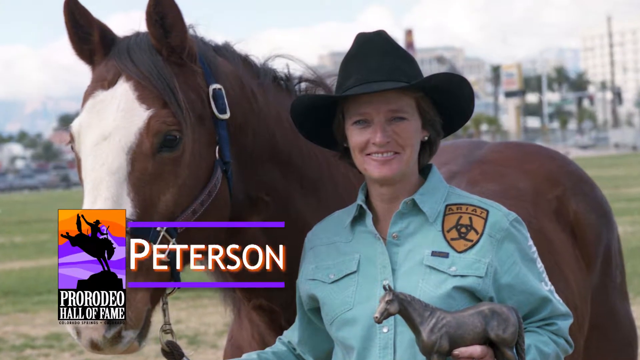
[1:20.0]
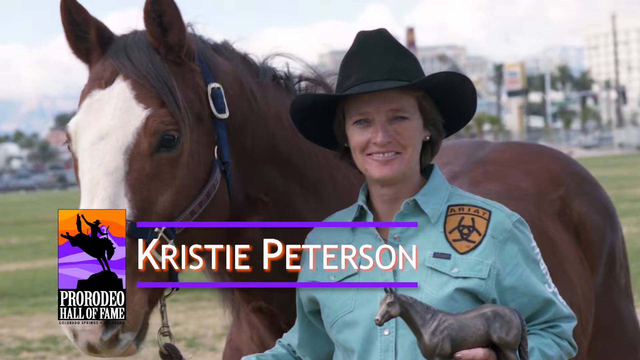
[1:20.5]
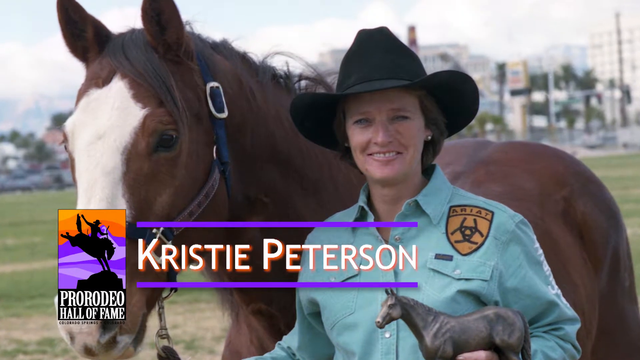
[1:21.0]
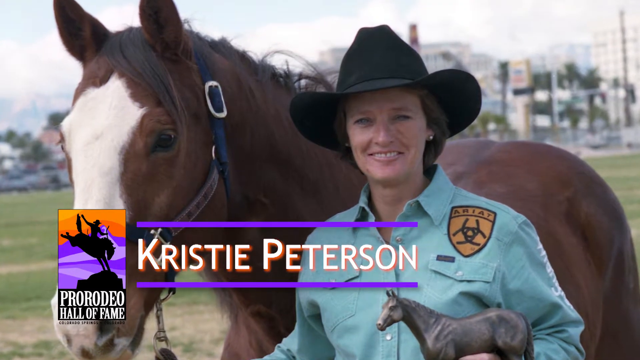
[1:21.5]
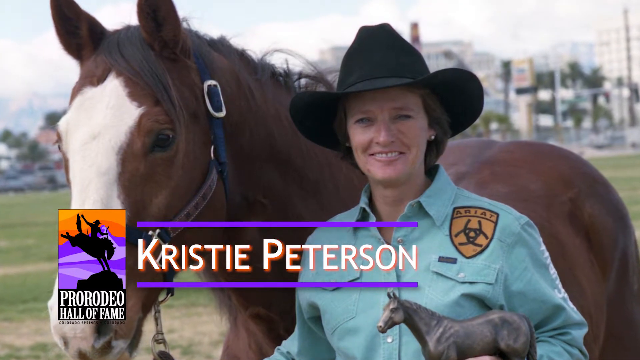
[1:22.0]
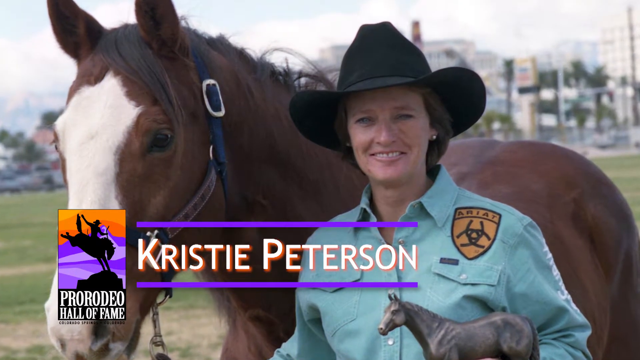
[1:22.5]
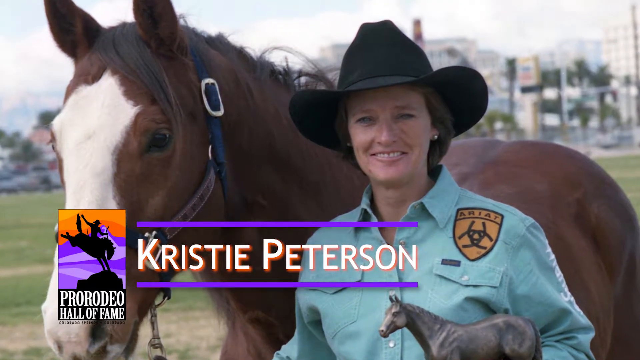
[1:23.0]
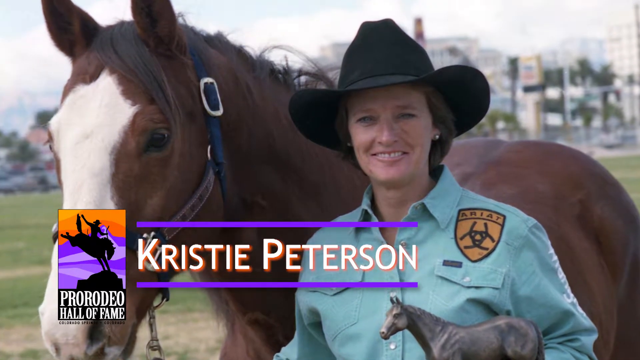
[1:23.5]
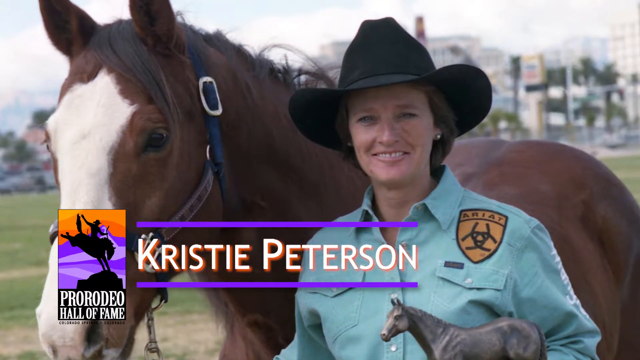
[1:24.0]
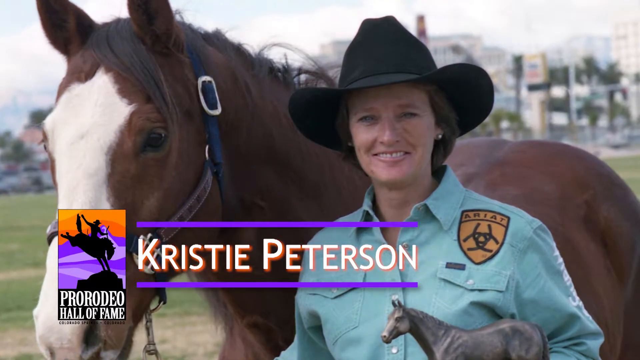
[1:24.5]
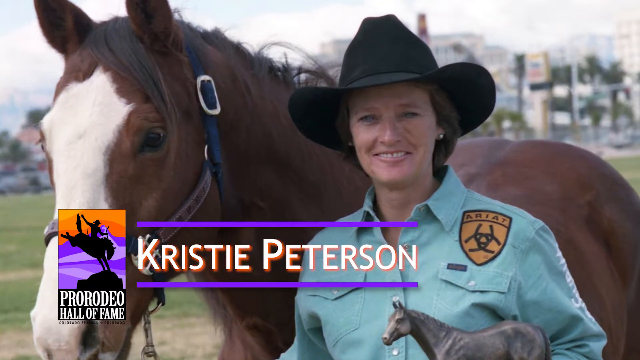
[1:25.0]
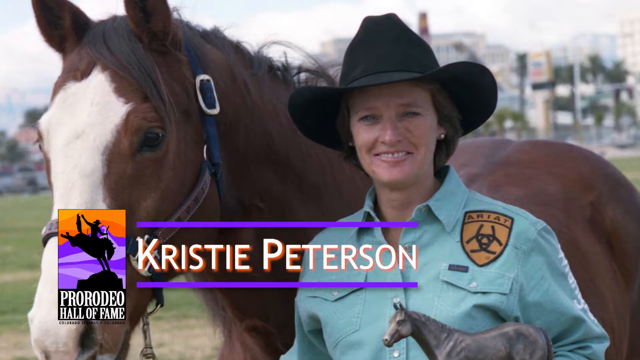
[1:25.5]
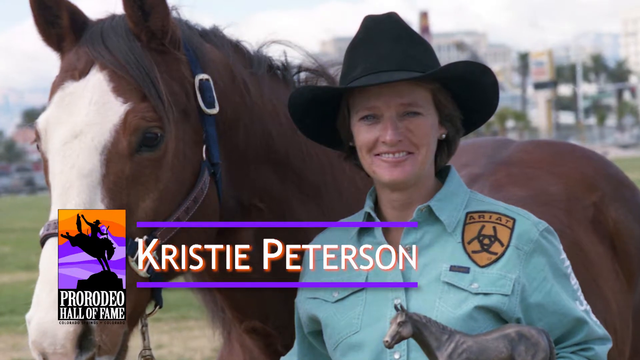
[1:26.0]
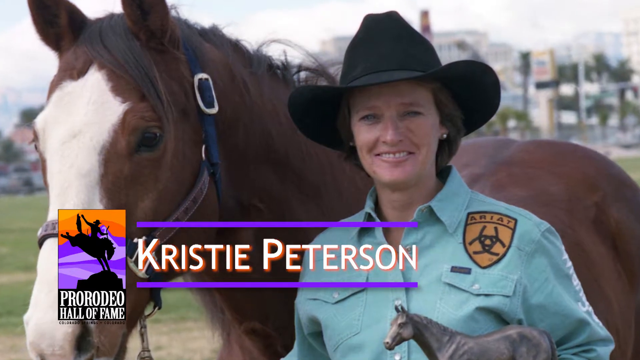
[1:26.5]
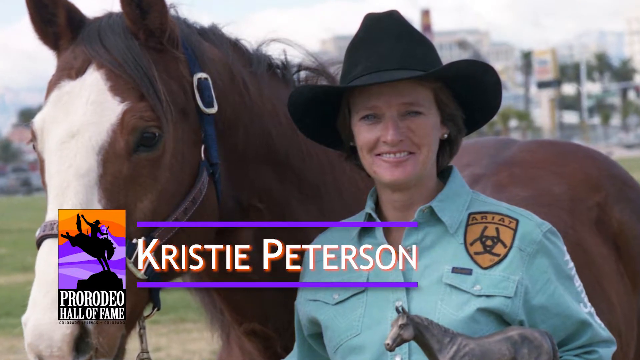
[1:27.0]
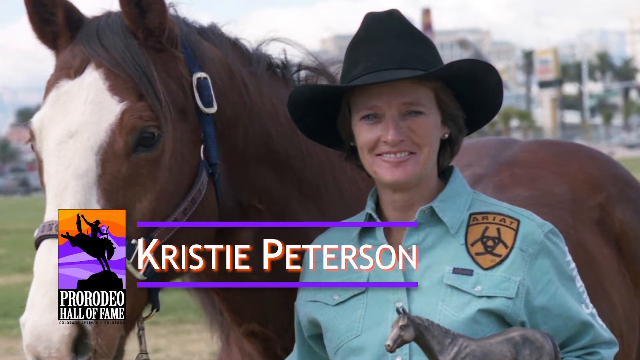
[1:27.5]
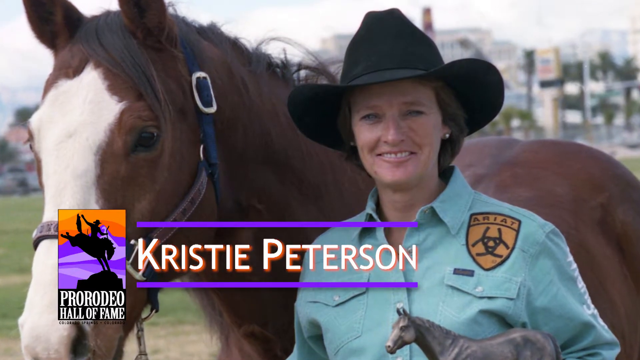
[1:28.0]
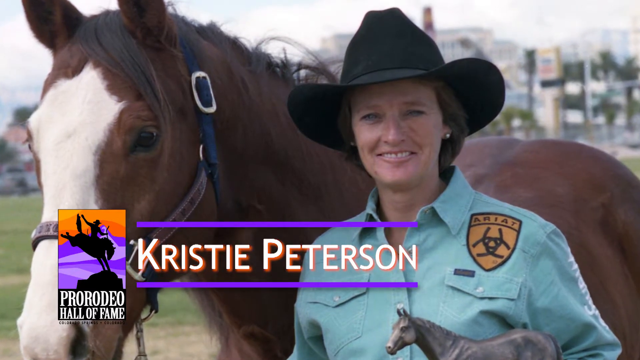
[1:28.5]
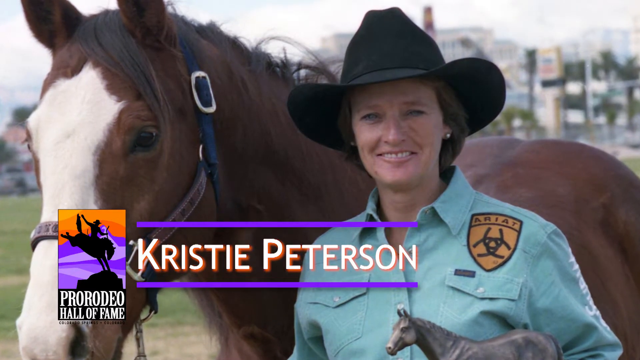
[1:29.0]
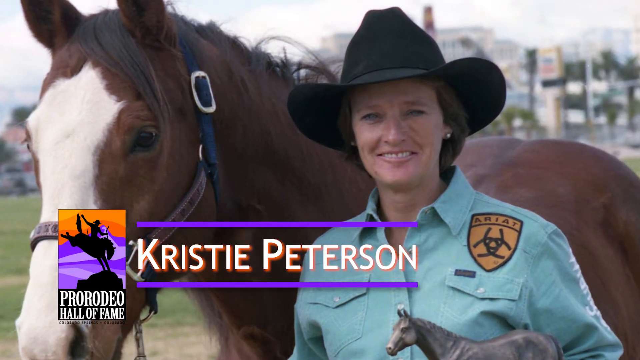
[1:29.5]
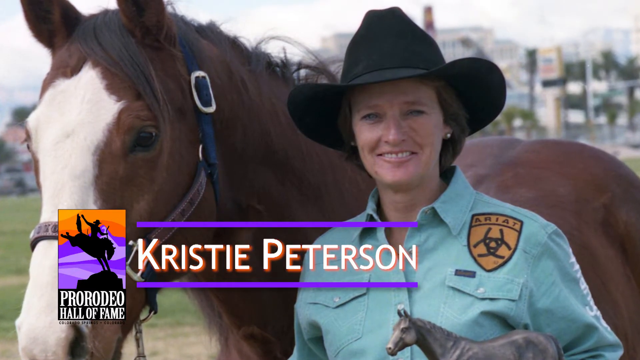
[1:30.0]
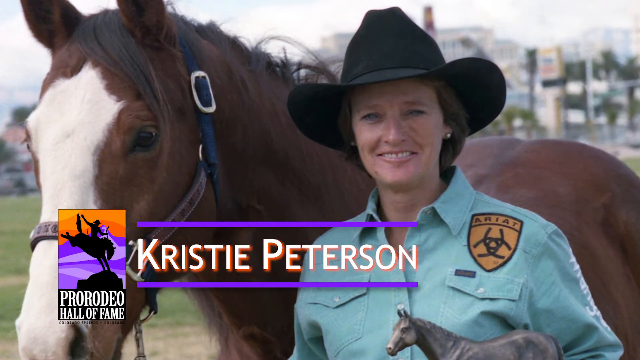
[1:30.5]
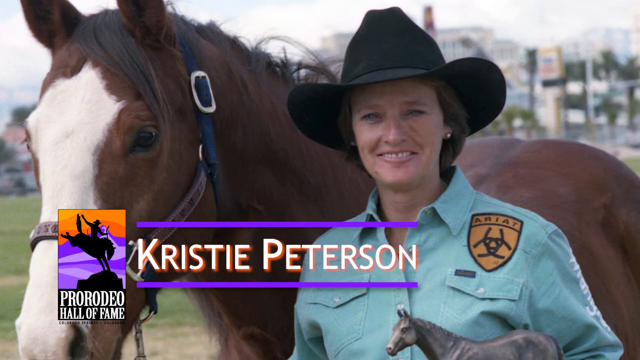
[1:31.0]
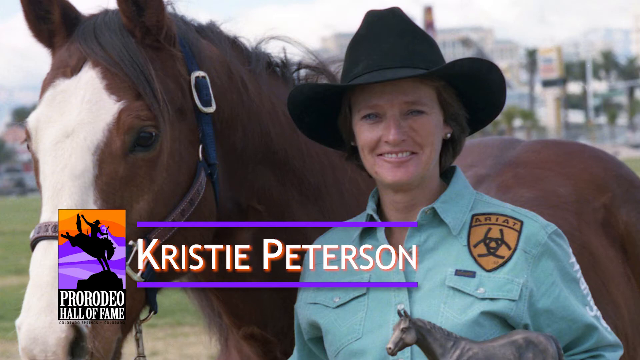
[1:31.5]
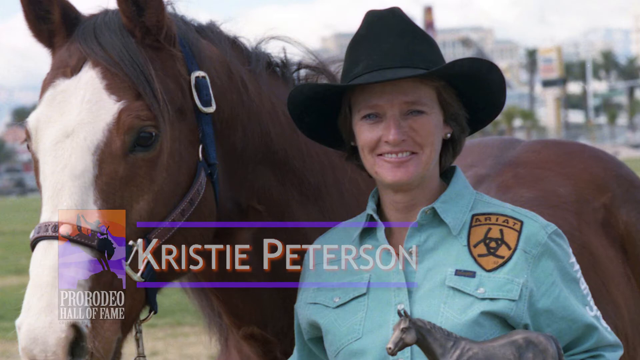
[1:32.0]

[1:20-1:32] The picture of Christy Peterson remains on screen, with her name shown on the screen and "Pro Rodeo Hall of Fame" on the left. She wears the light blue denim long-sleeved collared shirt with an emblem on the left chest area that says "Ariat" in an orange patch with some design on it, and a black hat. She has earrings in both ears and is smiling. She seems to have dark brown hair, looks Caucasian, and looks to be maybe in her late 30s or even mid 40s. She carries the horse trophy in her left hand, and to the right of her is the horse she rides in the video, the one with the white patch on its face. The camera slowly zooms into the picture.